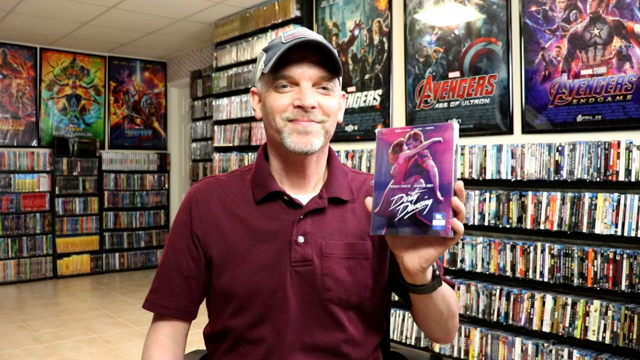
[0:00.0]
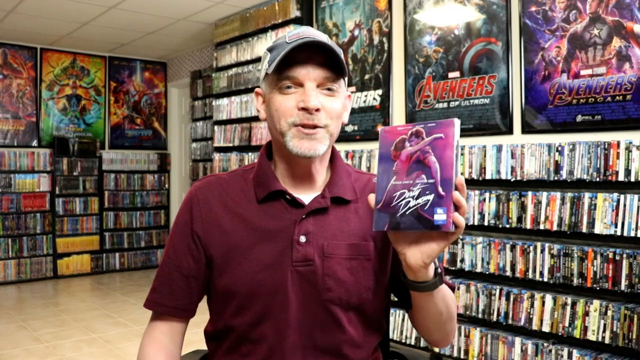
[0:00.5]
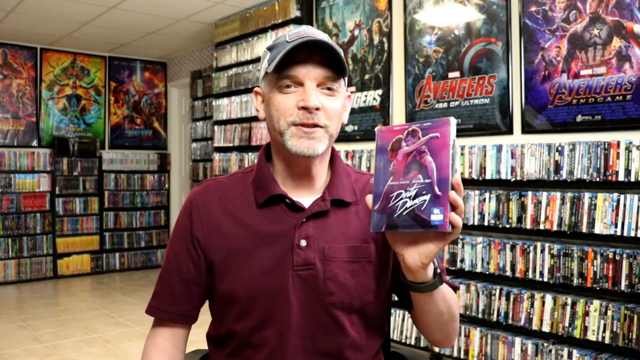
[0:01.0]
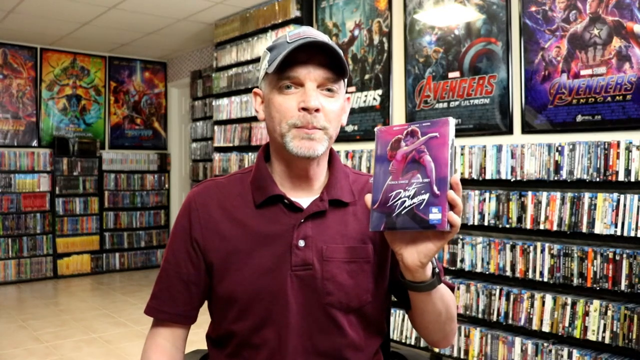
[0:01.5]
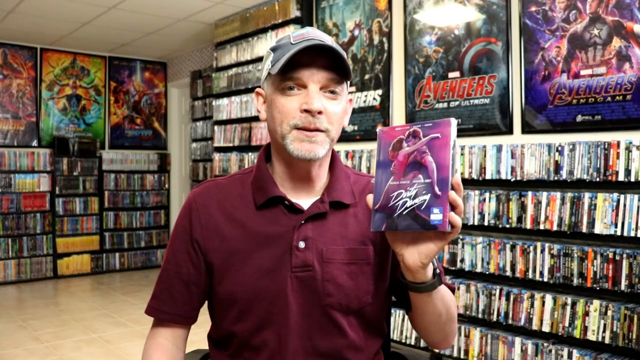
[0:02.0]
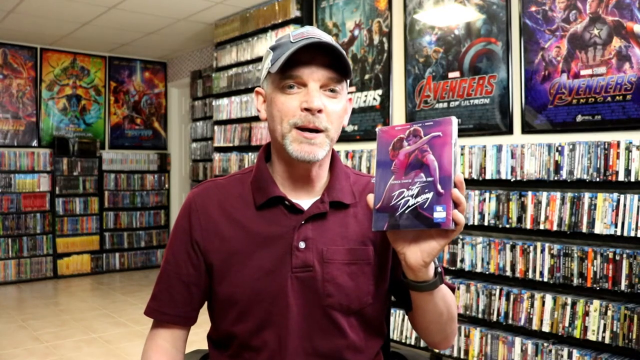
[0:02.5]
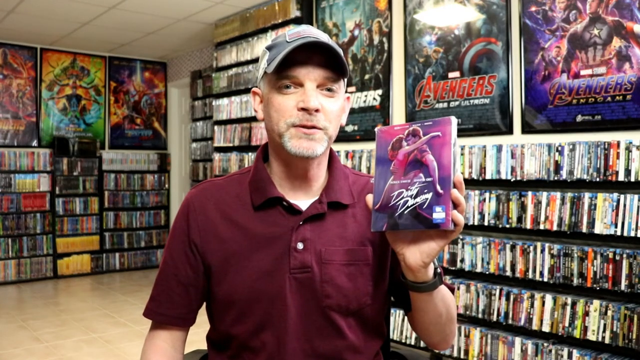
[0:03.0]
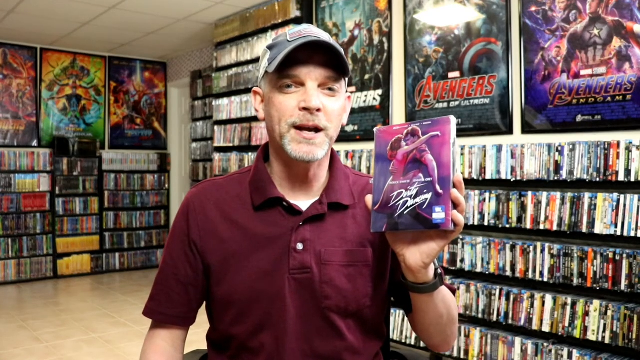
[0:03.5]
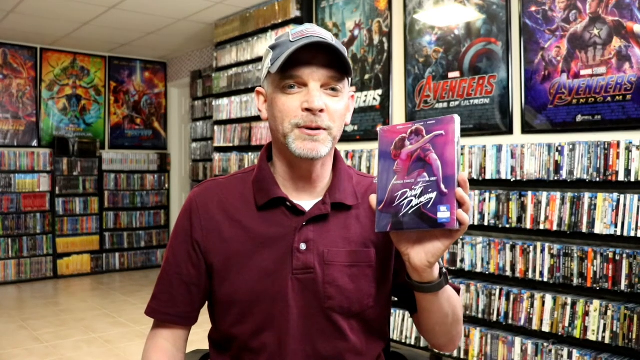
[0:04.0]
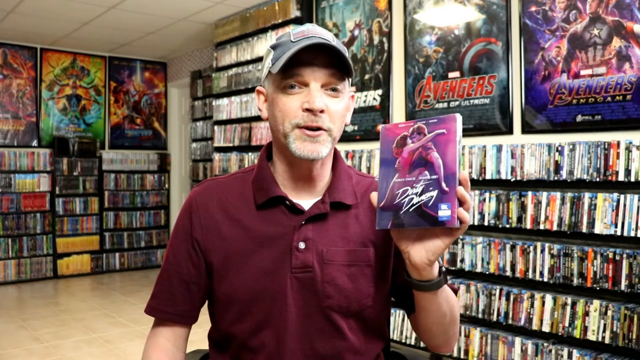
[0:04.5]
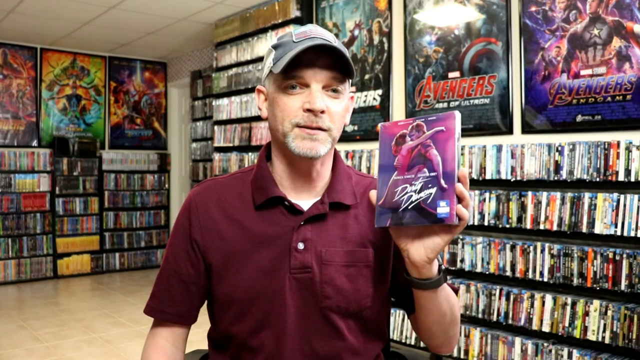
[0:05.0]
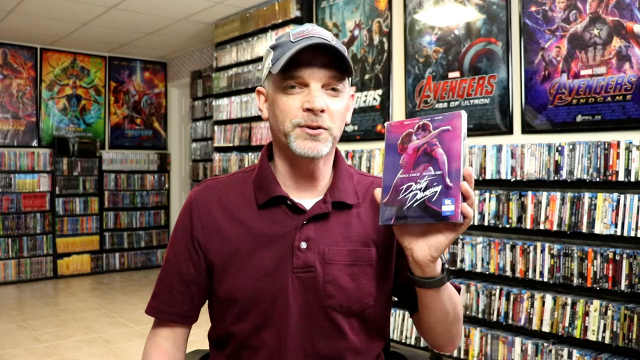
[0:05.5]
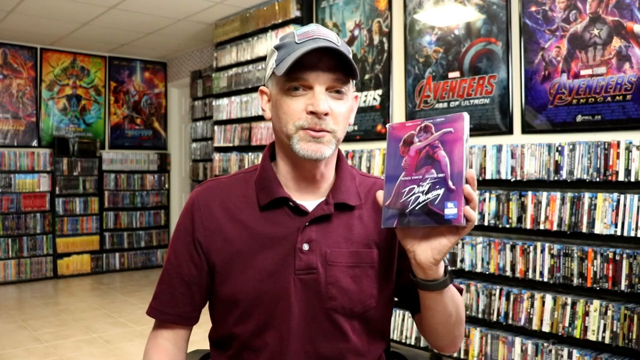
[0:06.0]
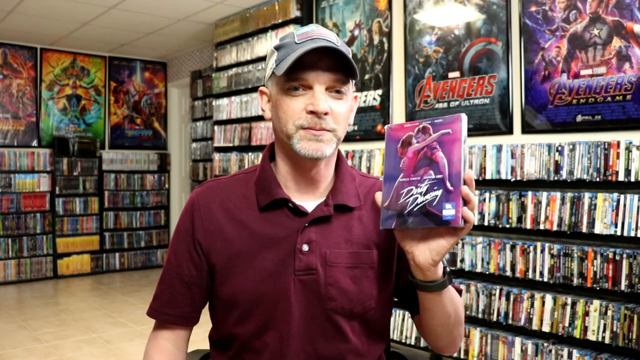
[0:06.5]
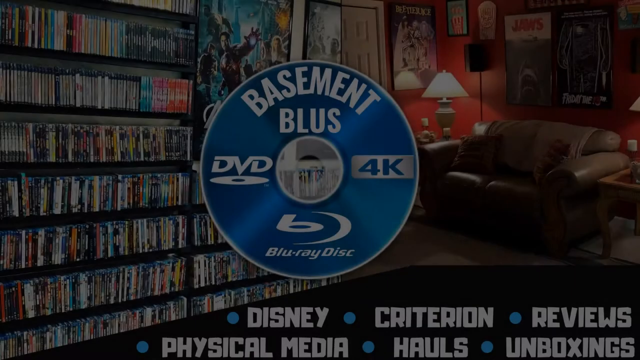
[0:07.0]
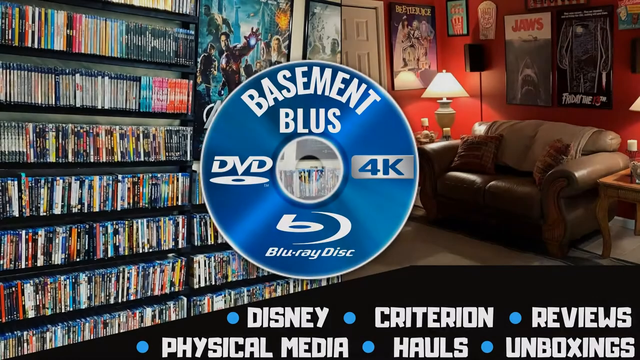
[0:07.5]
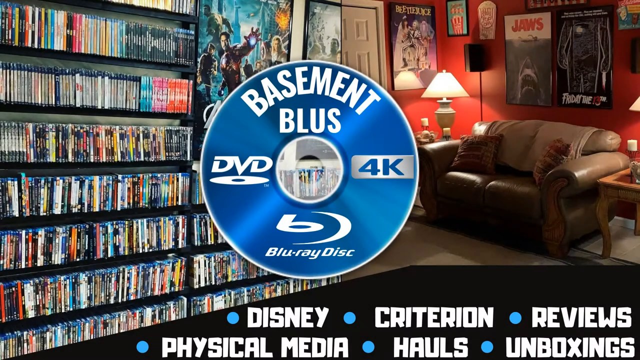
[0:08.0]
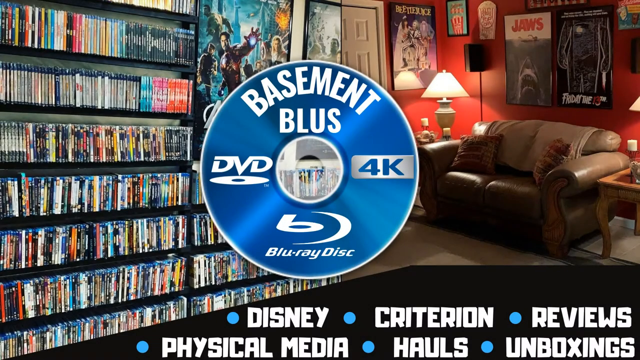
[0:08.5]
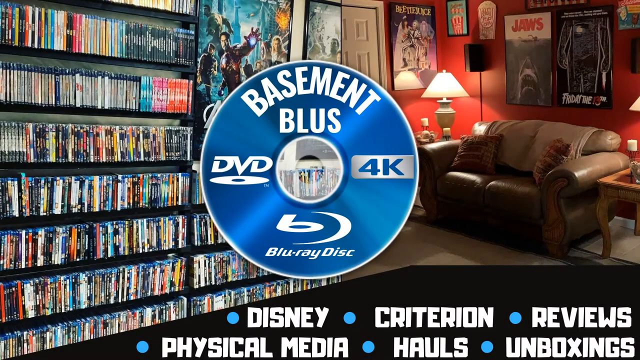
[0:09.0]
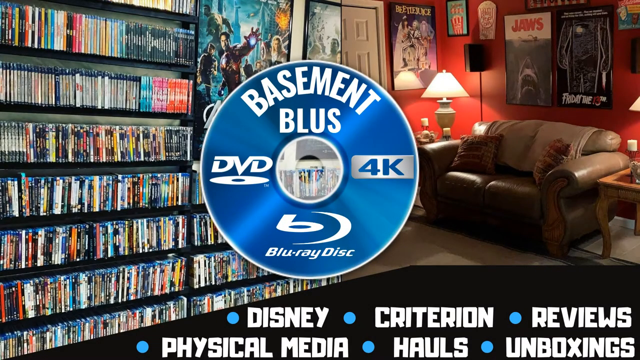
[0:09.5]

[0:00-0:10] A man in a red shirt, which looks like a polo shirt, has some gray hair on his face and wears a grayish cap with some sort of patch on top whose writing is hard to read. He looks maybe in his late 40s to mid 50s. He holds a copy of the movie Dirty Dancing in his left hand and appears to be giving an explanation. He is in a room, possibly a green screen background, that looks like a sort of movie room with tons of shelves full of movies. Posters of superhero films, the Avengers films in particular, are up on his wall, with six giant Avengers posters in frame.